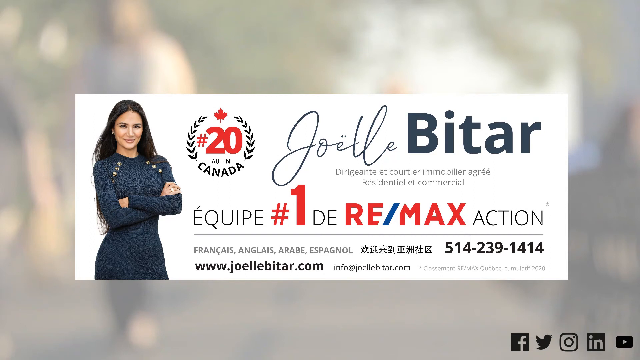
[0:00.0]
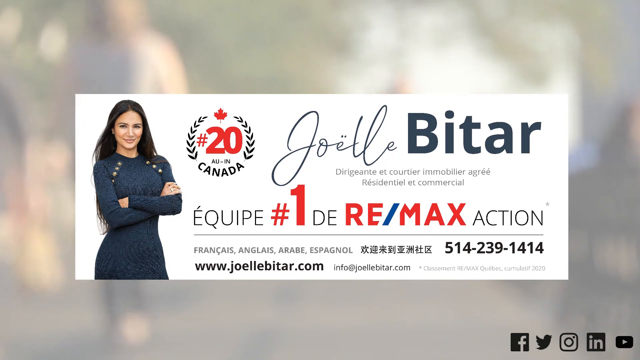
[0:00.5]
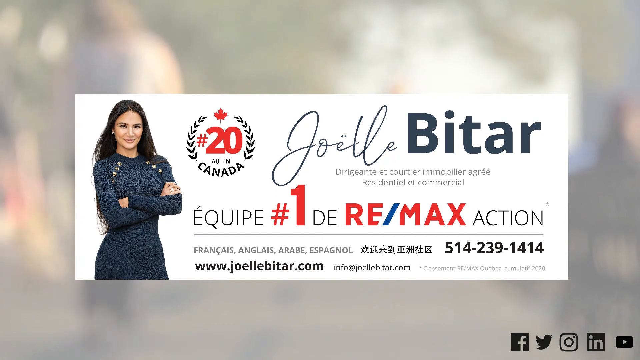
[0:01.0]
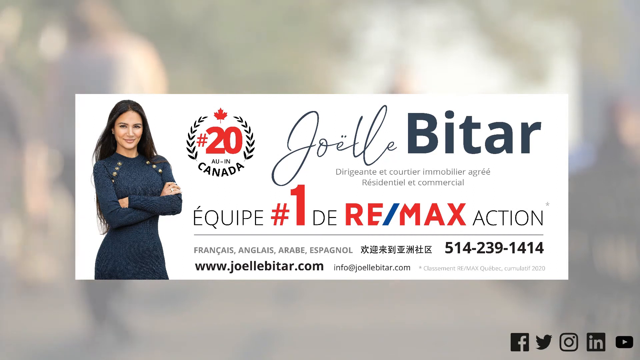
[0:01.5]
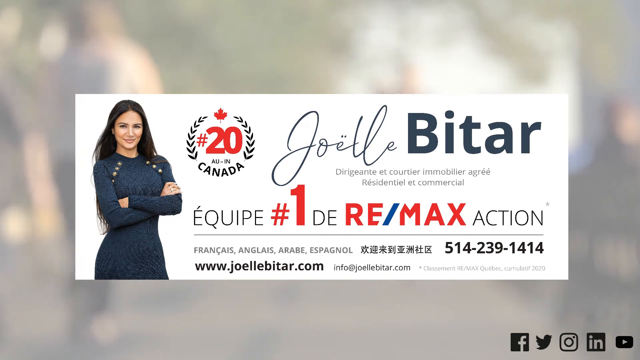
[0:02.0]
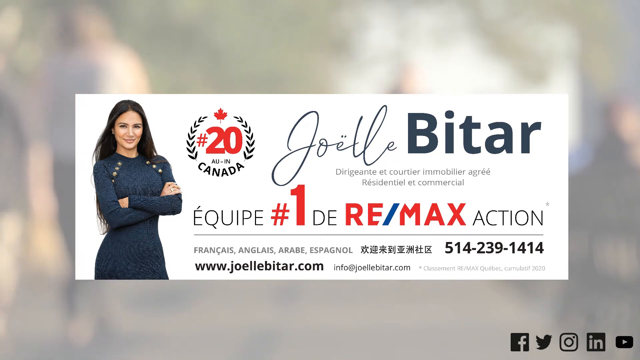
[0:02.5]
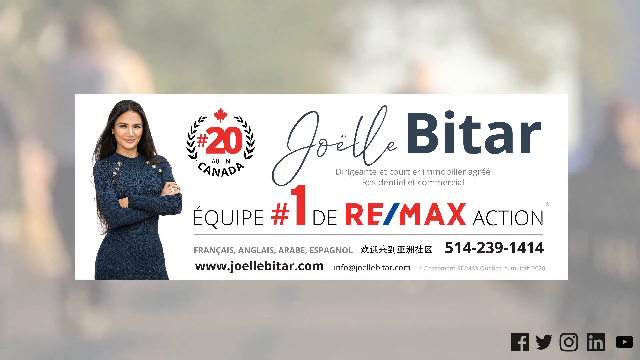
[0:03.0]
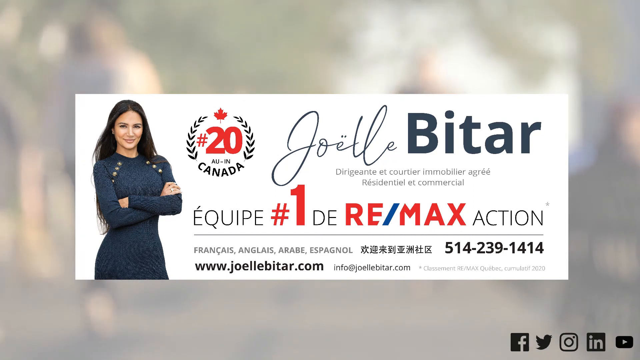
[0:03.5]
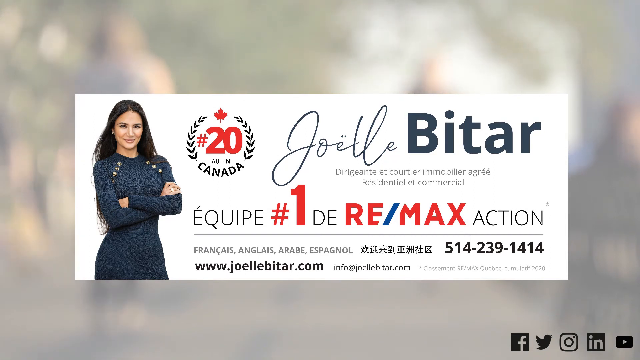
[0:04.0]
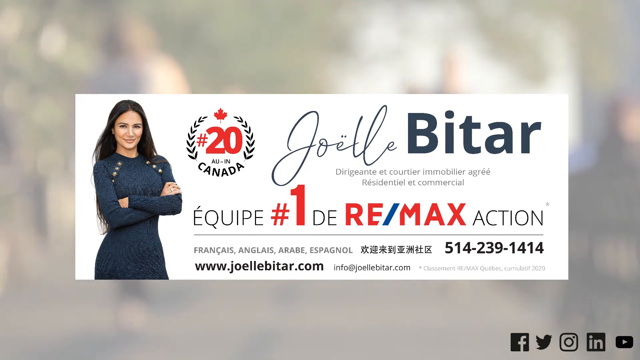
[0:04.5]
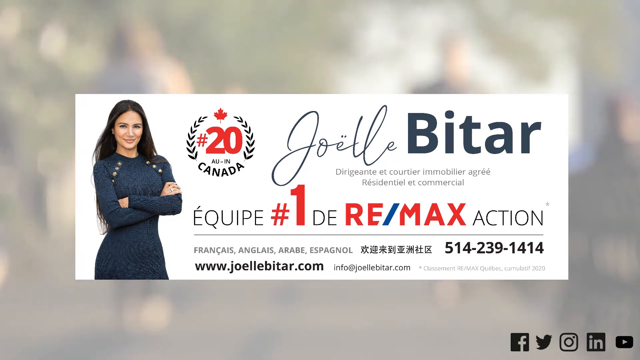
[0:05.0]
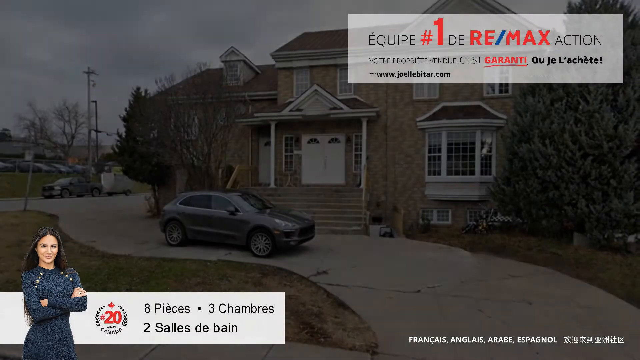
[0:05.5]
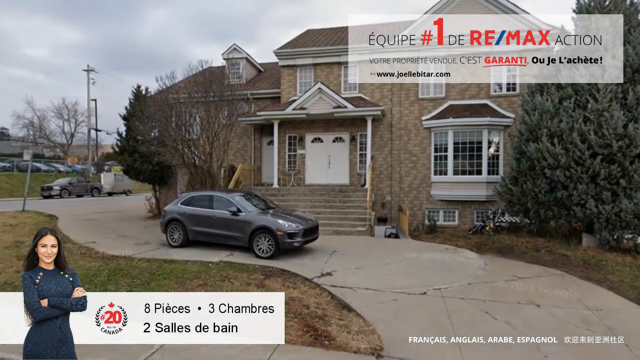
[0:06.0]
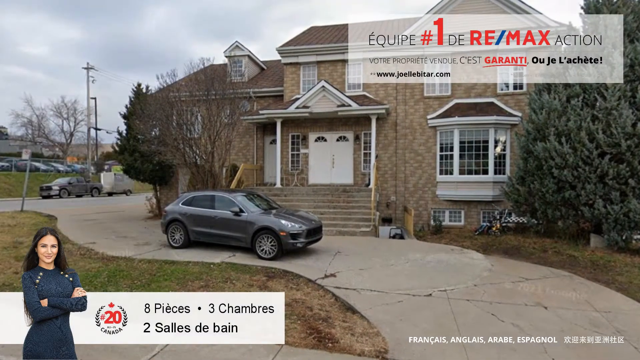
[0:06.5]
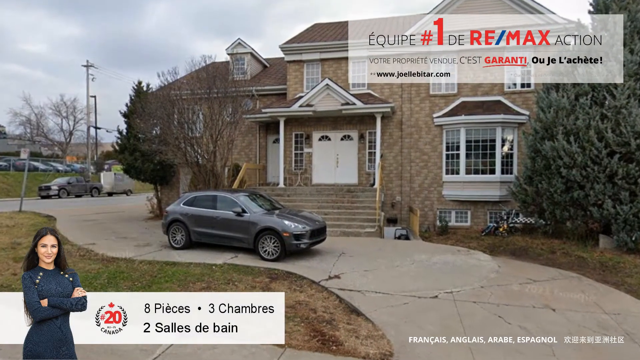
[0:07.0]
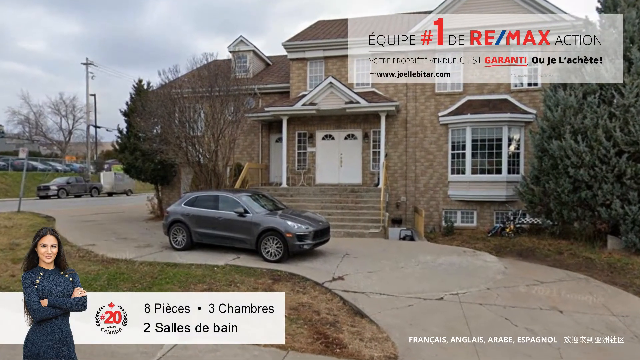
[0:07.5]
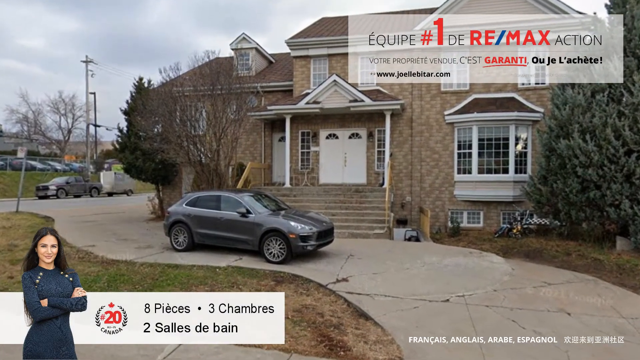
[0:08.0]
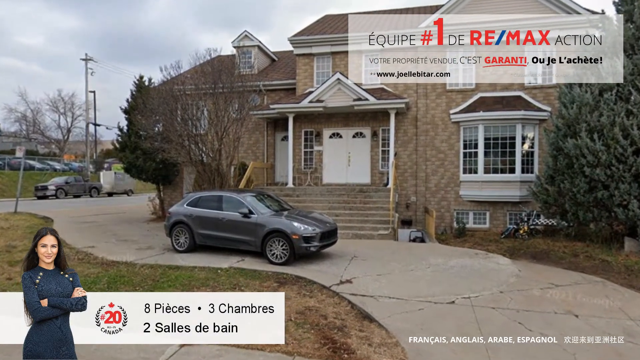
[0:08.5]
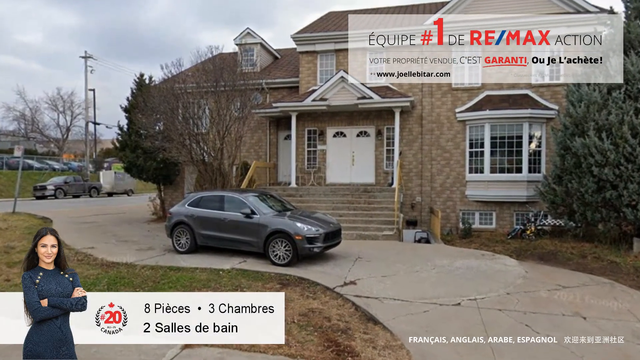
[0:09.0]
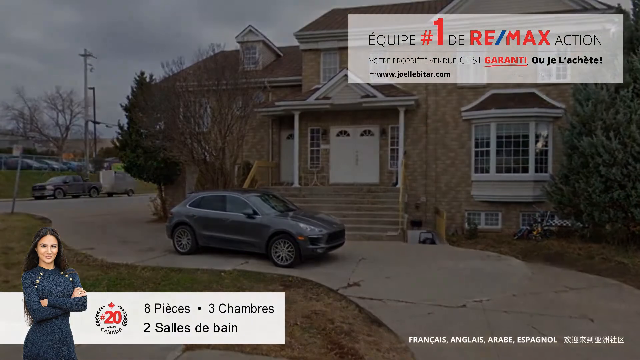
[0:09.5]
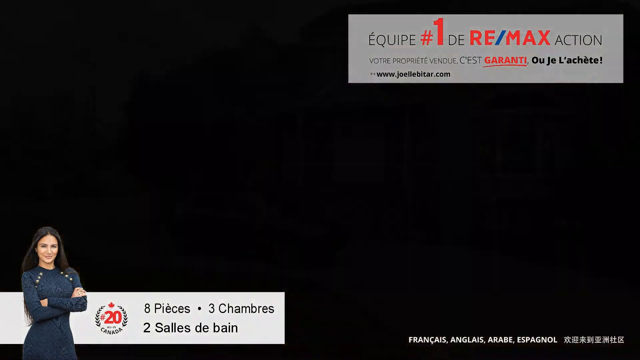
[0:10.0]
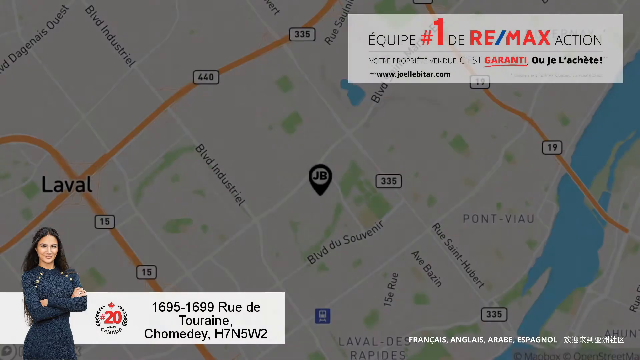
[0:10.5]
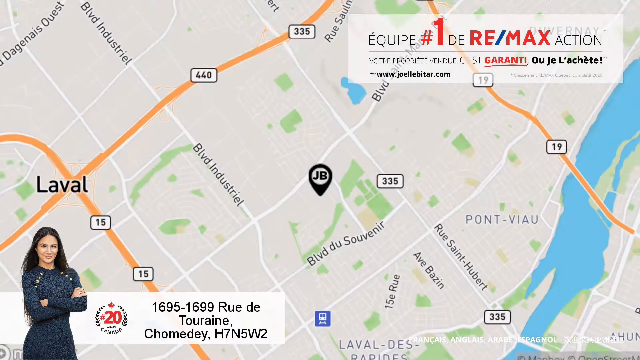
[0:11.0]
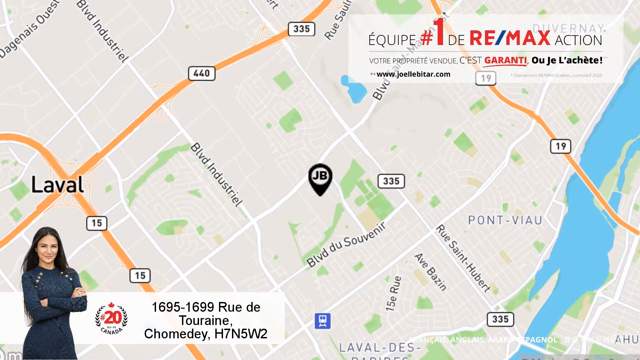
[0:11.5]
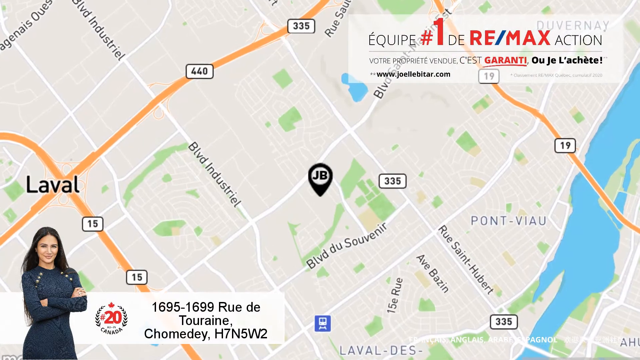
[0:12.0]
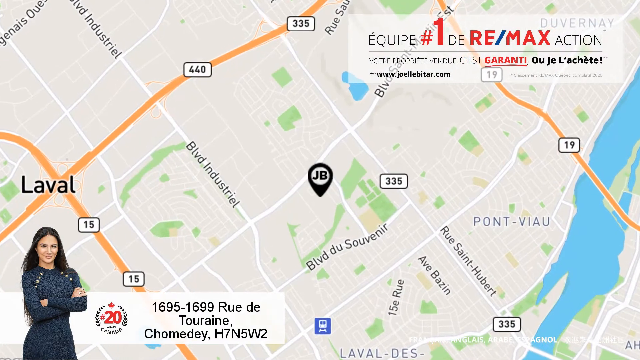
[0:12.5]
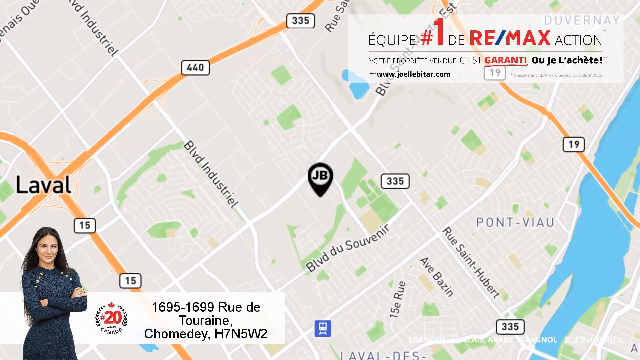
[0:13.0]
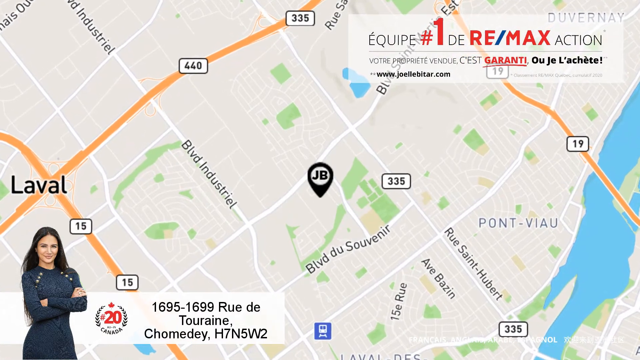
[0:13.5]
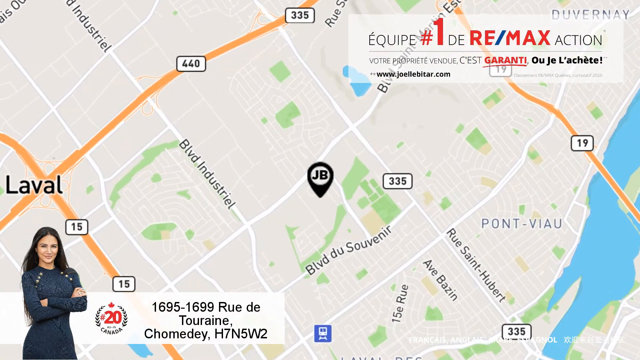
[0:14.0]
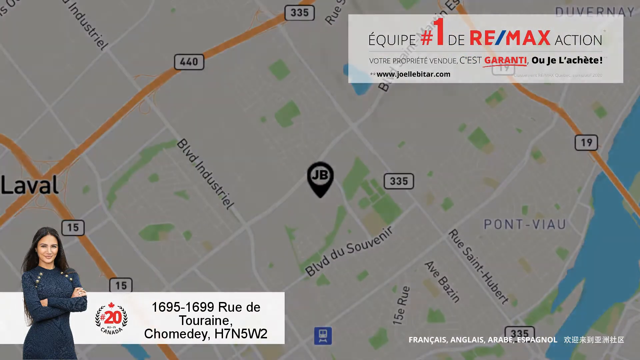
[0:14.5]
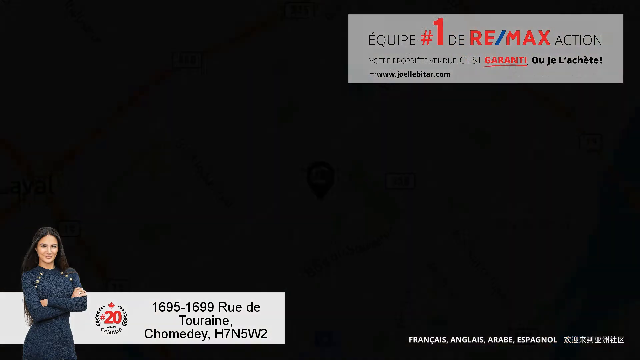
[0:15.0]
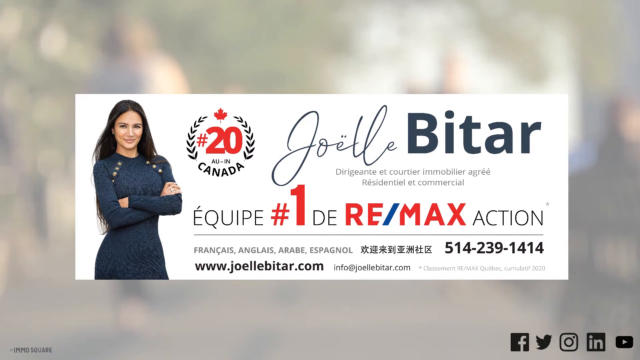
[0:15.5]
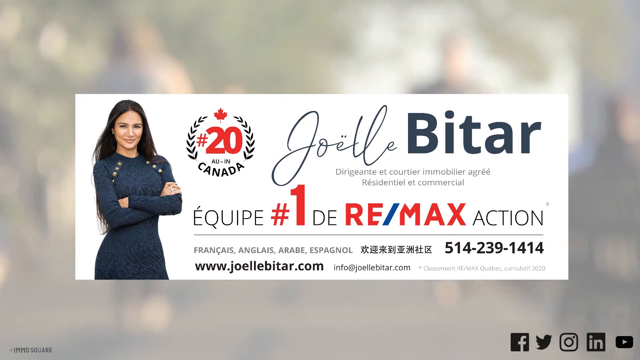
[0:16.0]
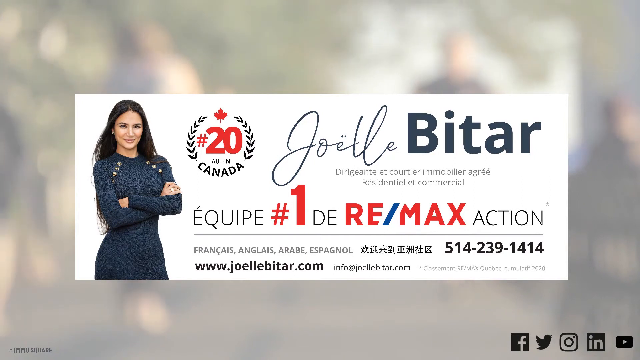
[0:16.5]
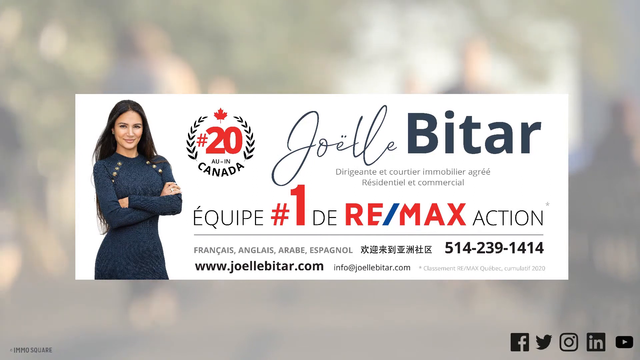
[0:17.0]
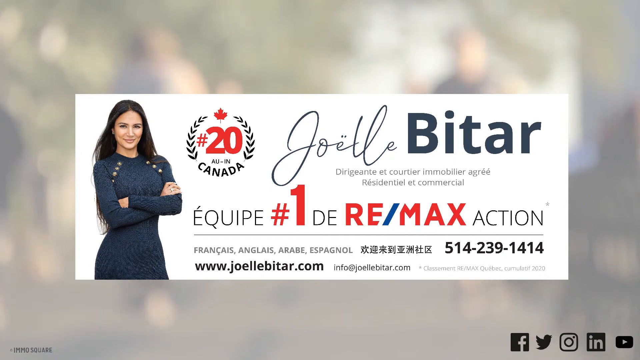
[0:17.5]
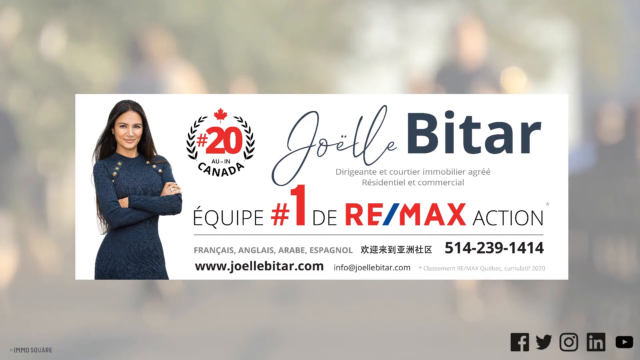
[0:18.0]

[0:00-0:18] This is an ad for a real estate company called Remax, apparently for a person who is selling a house. It opens with a woman with black hair posing, with a website and a phone number listed, and people moving around in the background. That disappears and cut to a shot of a very large house with a long driveway and a car parked in front of the driveway. The house appears to be brick and has multiple trees on either side of it. To the left there are multiple cars, and a truck with a trailer comes down the road. Throughout the part of the ad with the house, the woman is still standing, smiling with her arms crossed. From there, the ad goes to a map with a point on it. The language seems to be something other than English, apparently French.